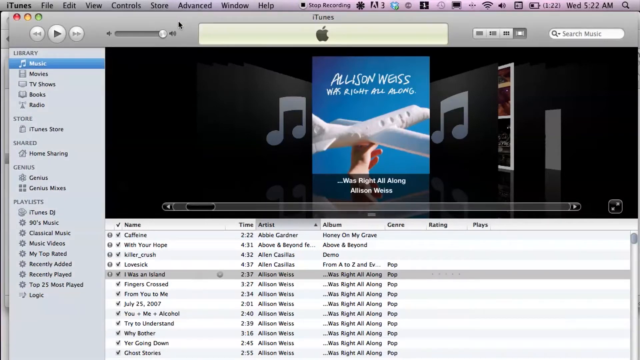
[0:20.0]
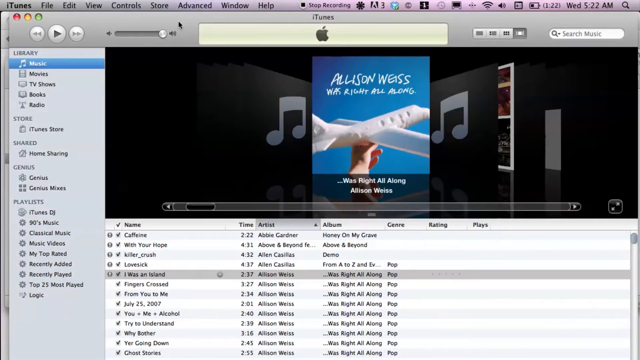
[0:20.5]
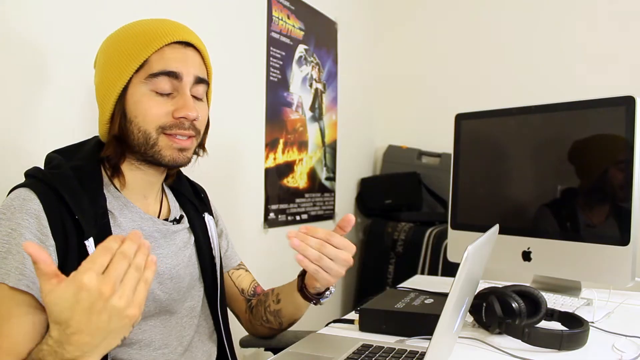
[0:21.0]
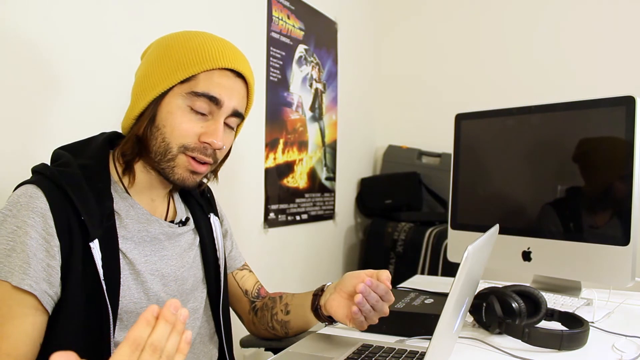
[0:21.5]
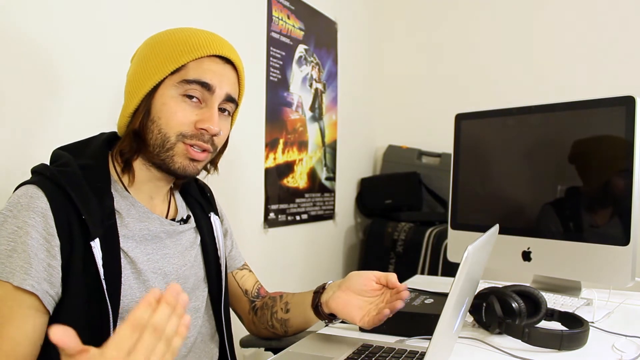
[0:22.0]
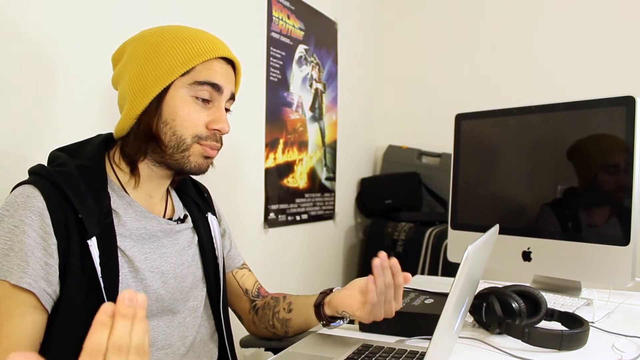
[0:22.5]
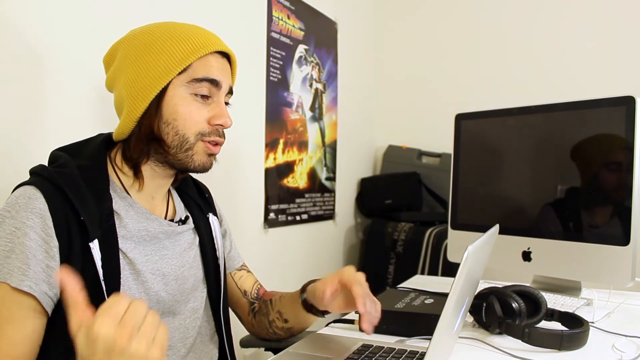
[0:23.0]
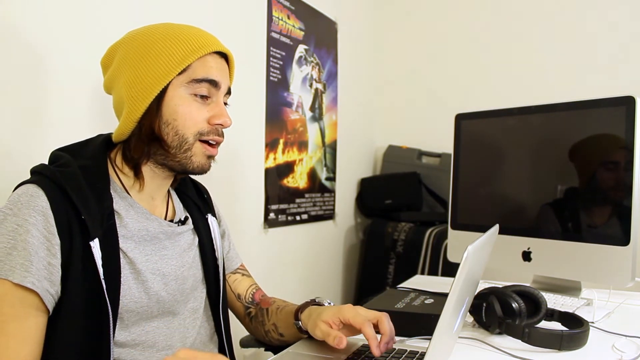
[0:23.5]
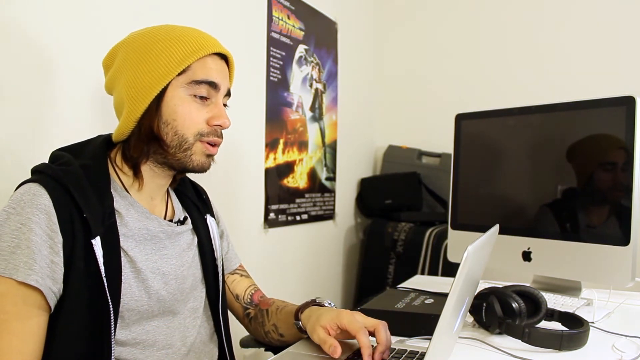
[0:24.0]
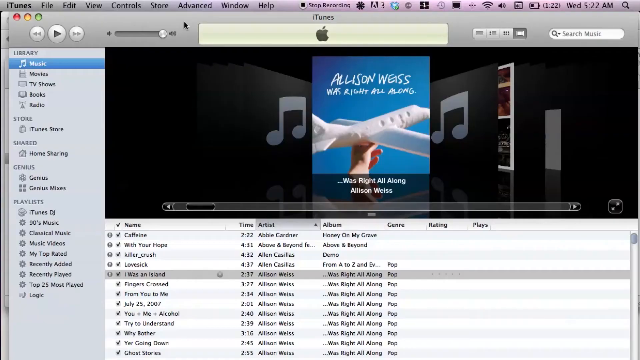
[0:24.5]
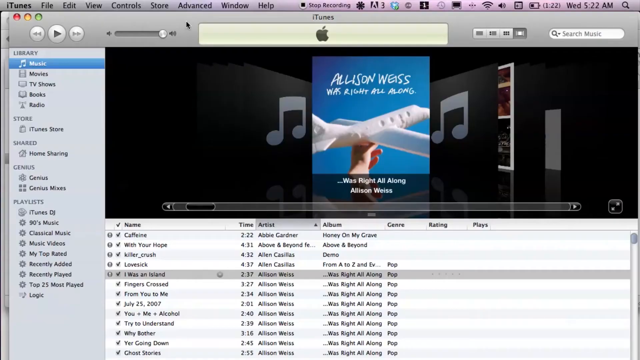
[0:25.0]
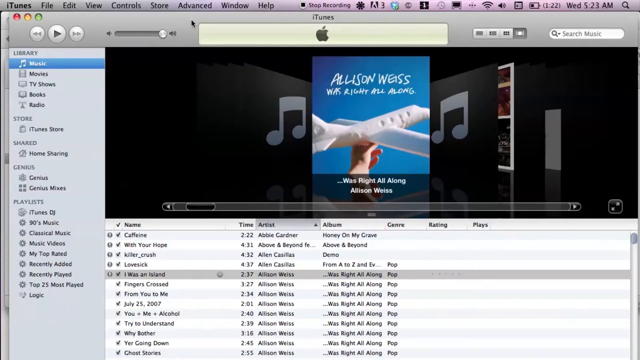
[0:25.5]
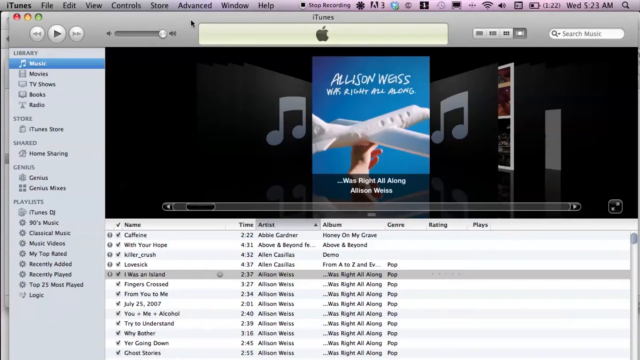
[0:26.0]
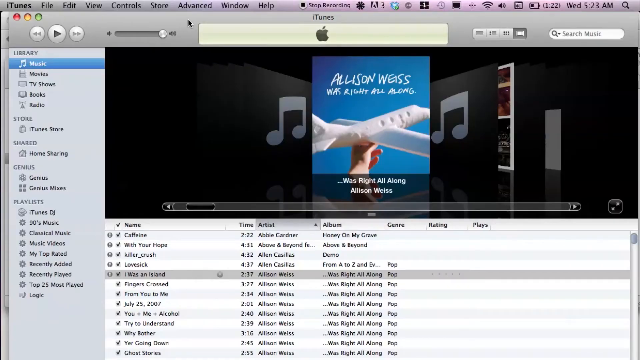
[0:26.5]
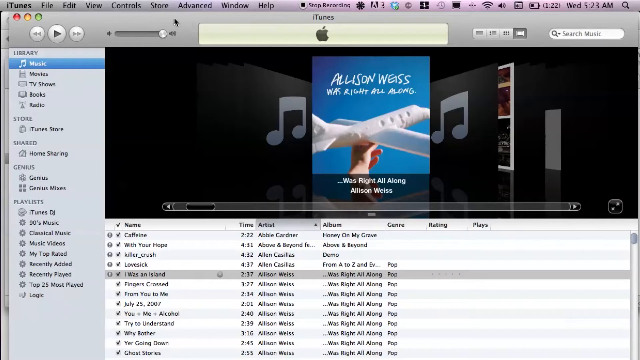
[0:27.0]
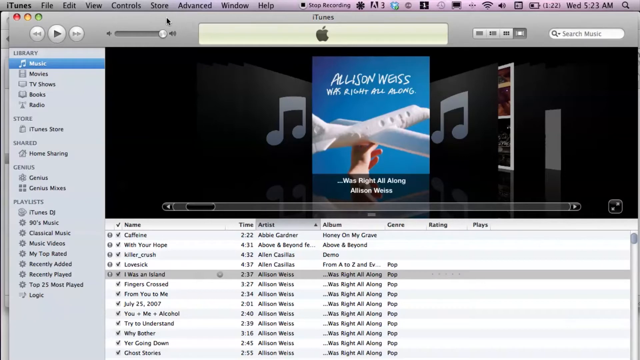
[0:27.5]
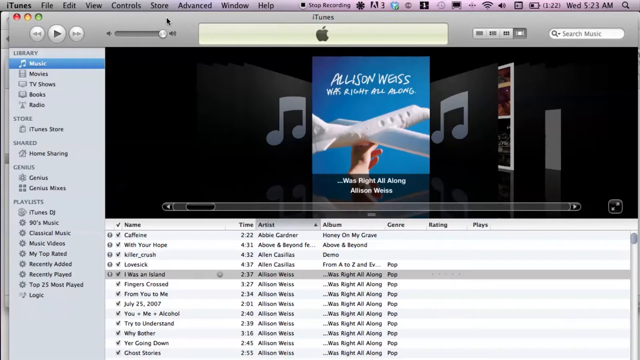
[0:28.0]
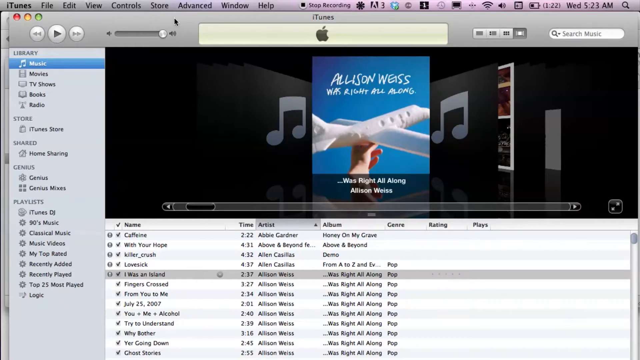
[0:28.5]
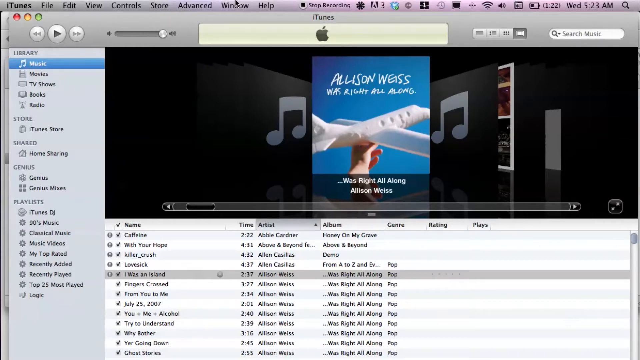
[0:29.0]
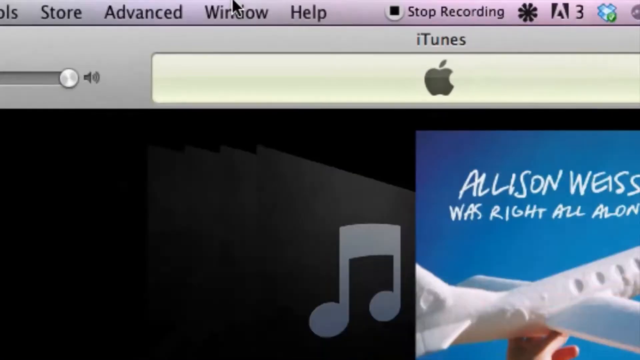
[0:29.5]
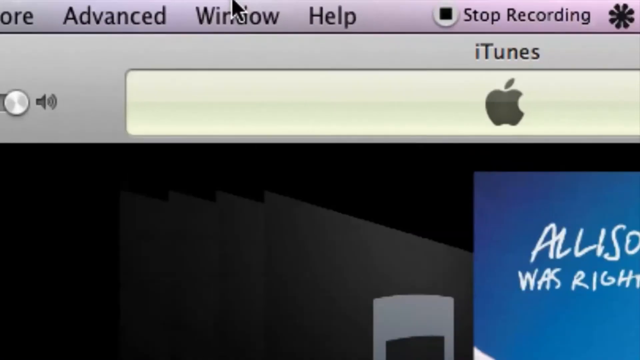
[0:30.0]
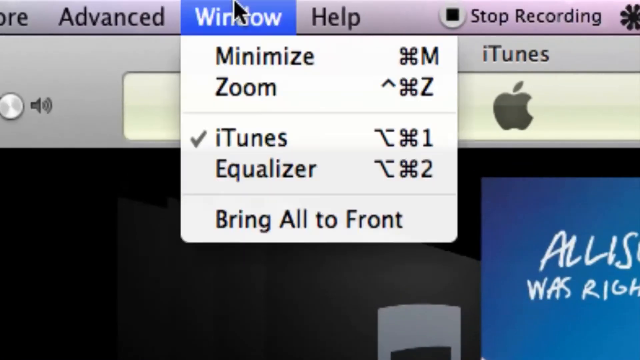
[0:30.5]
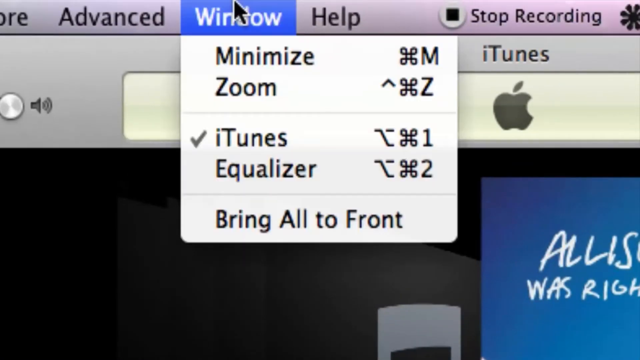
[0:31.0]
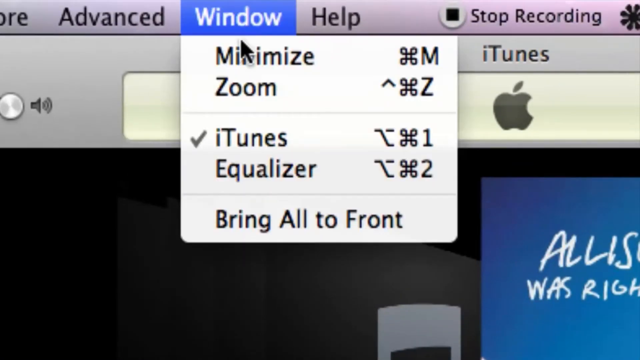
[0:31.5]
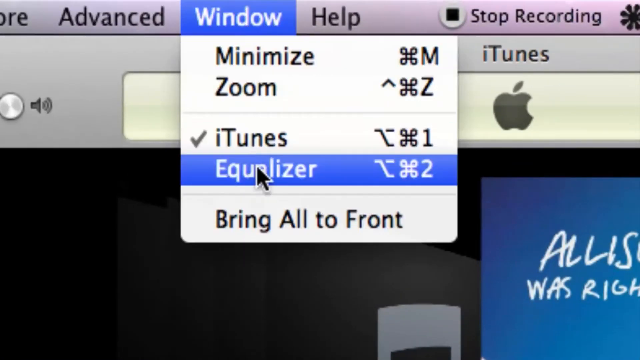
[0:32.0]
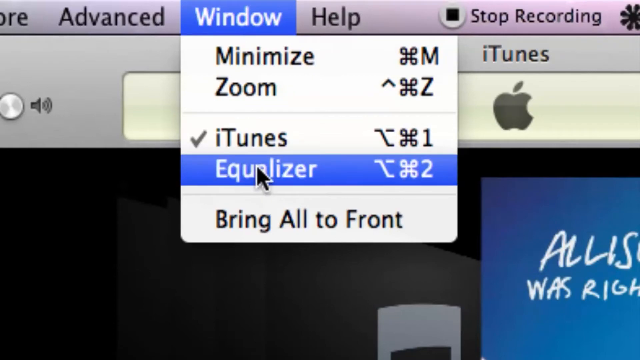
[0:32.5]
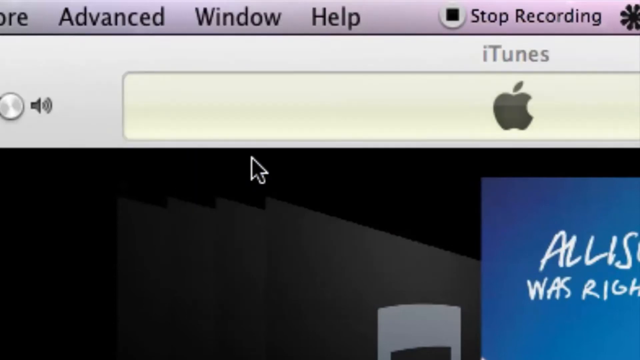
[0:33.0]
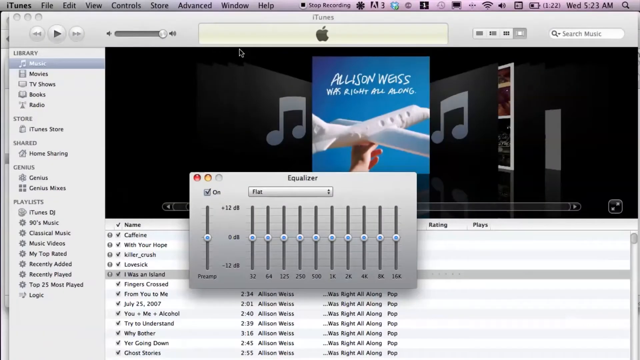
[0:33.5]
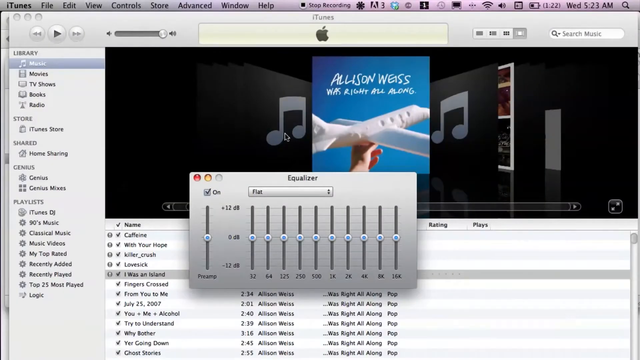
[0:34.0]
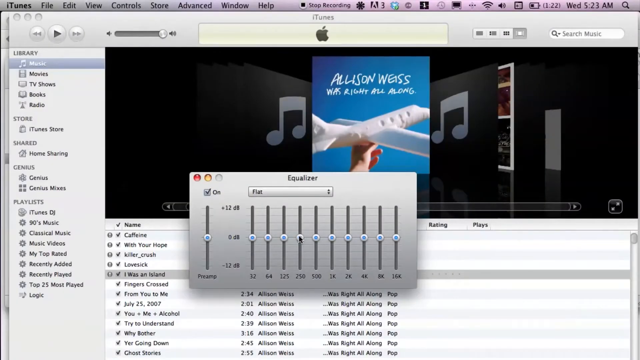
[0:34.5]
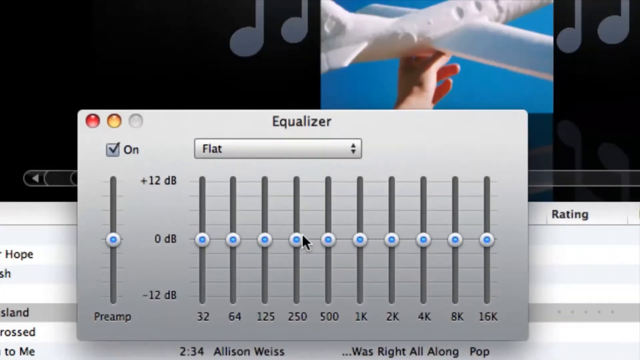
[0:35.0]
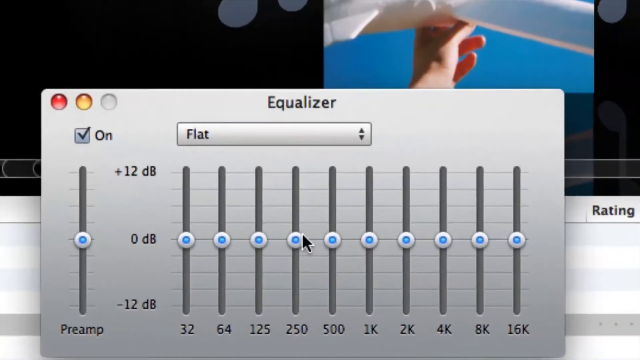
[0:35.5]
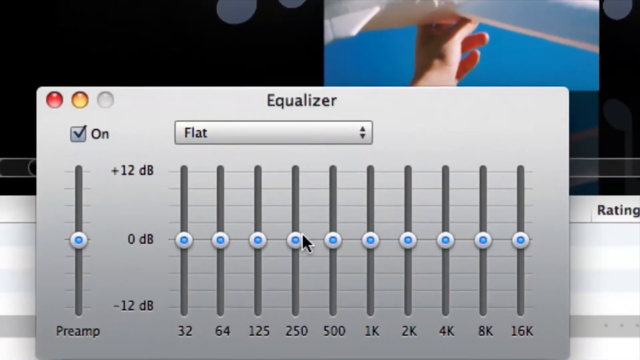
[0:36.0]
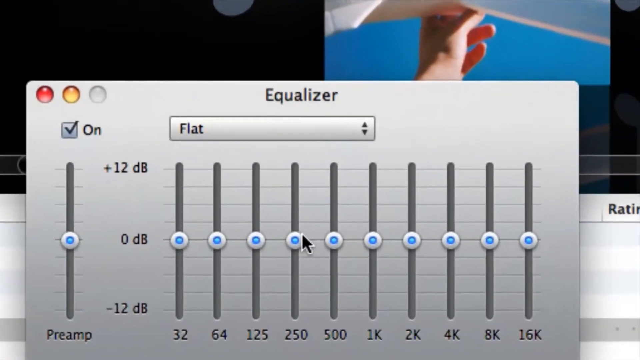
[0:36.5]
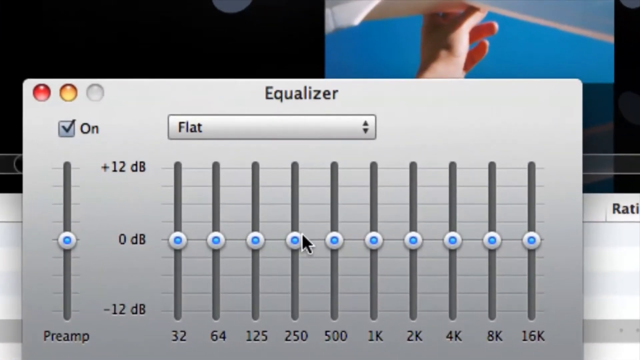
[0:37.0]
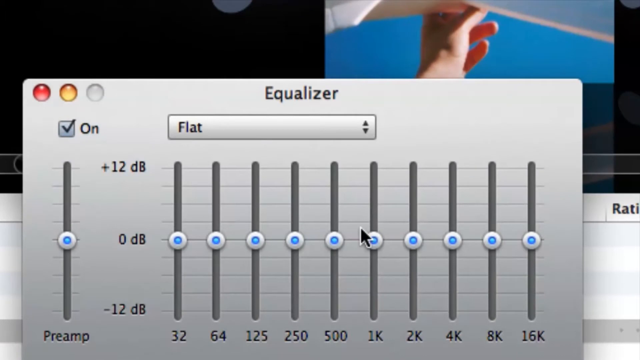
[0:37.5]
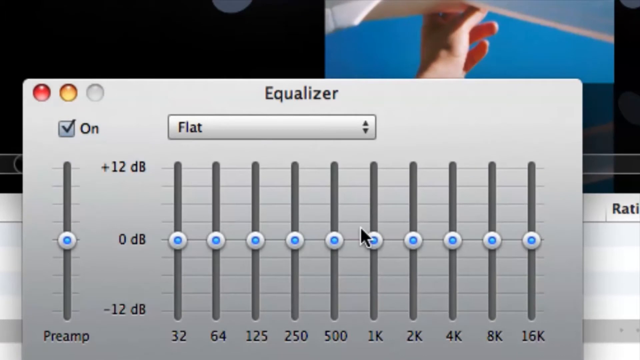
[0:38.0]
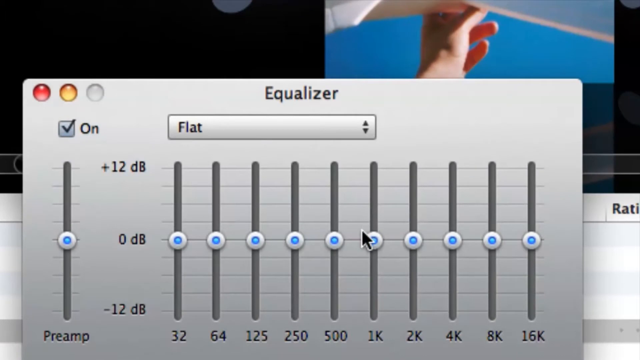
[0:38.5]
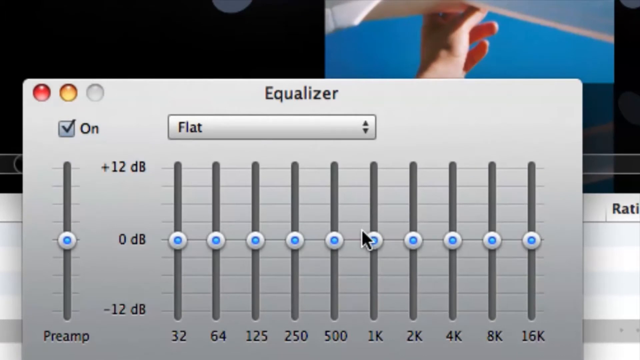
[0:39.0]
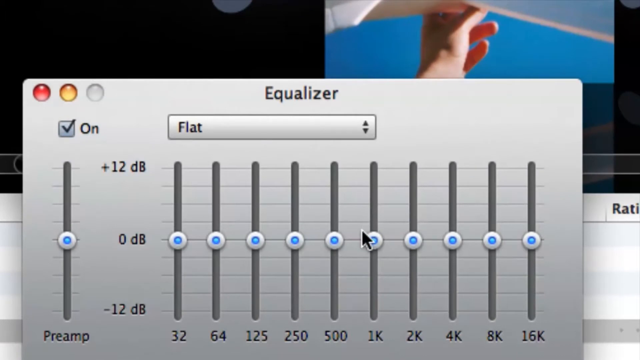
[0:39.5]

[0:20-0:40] The man returns, explaining. He appears to gesture with his hands, repeatedly folding his fingers back towards himself. He also appears to look between the camera recording him and what looks like possibly a tablet or a separate screen. The view flicks back to the iTunes window, where a cursor is visible; the screen enlarges as the cursor goes to the equalizer settings. The cursor selects Window and then Equalizer, and the new equalizer window pops up in the middle. The view zooms in on it, showing the different levels: there appear to be a number of settings with a decibel register, and underneath what looks like preset selections. "Flat" is shown at the top with two arrows, one facing up and one facing down, indicating there are probably other options that cannot be seen yet.